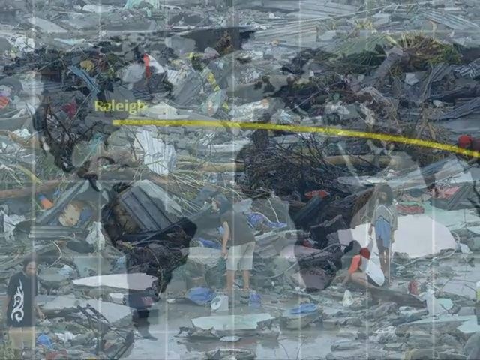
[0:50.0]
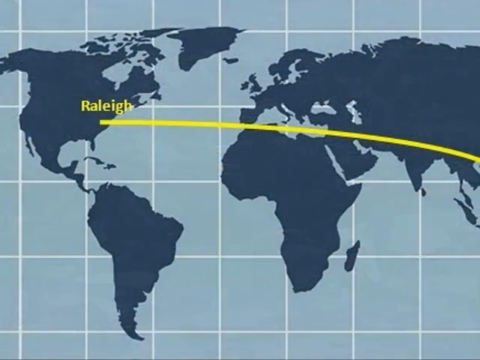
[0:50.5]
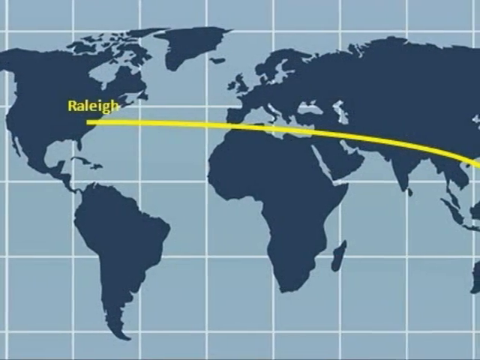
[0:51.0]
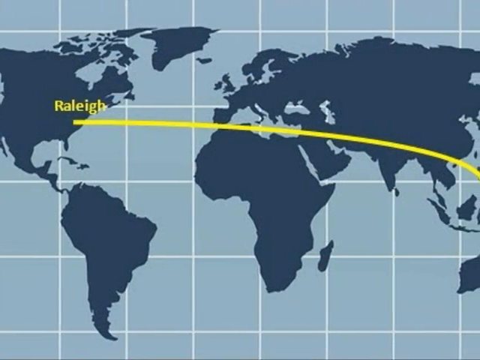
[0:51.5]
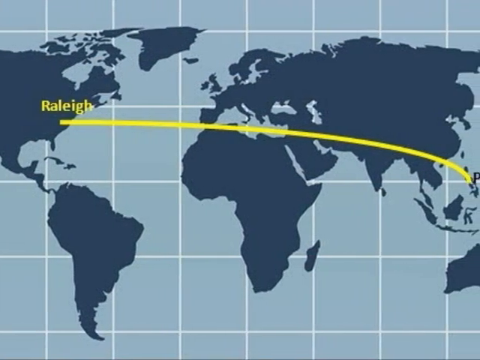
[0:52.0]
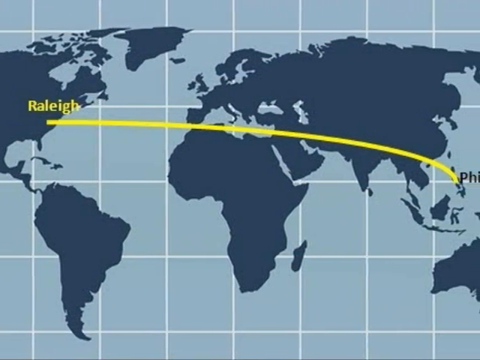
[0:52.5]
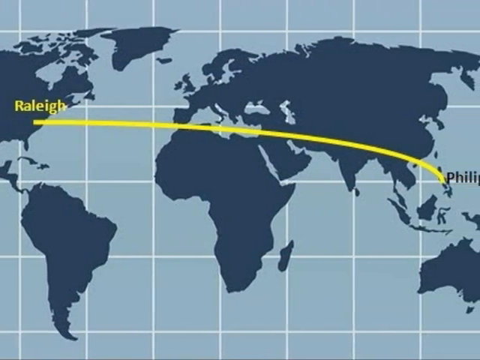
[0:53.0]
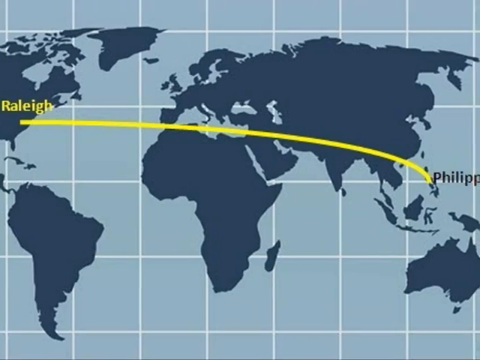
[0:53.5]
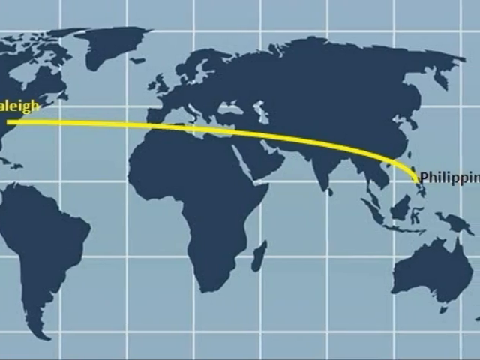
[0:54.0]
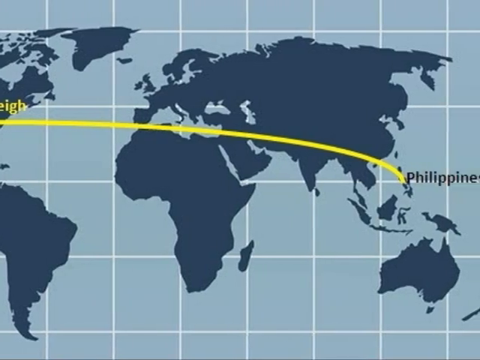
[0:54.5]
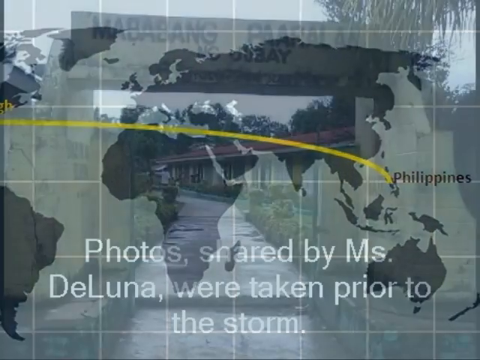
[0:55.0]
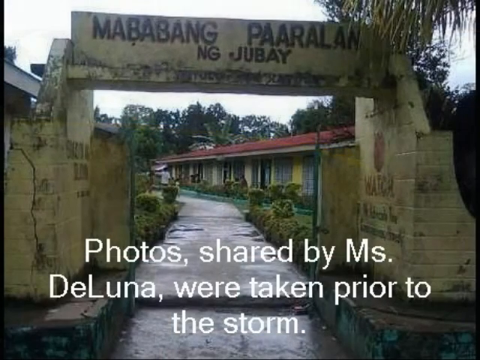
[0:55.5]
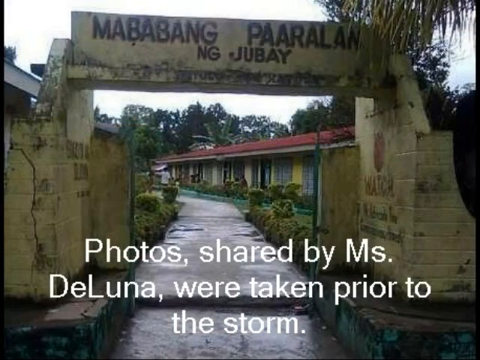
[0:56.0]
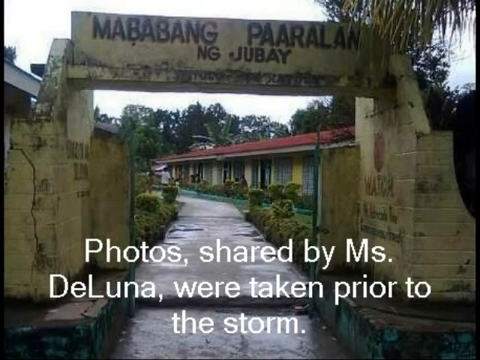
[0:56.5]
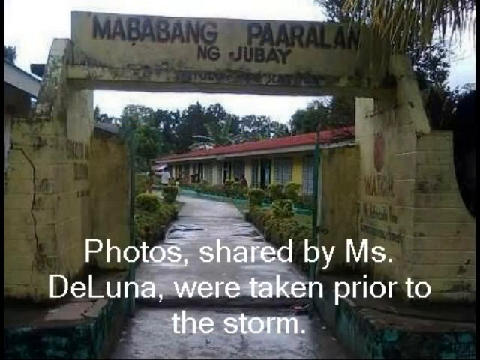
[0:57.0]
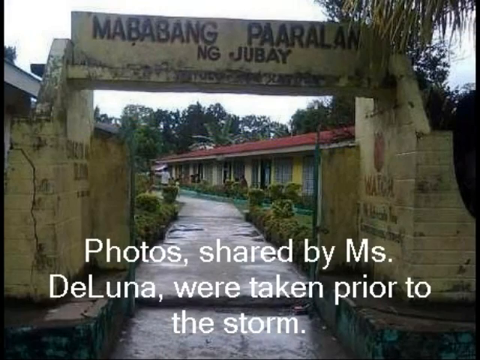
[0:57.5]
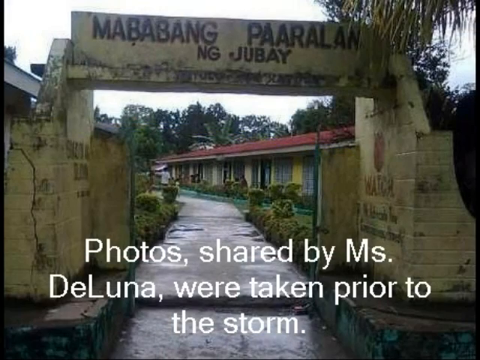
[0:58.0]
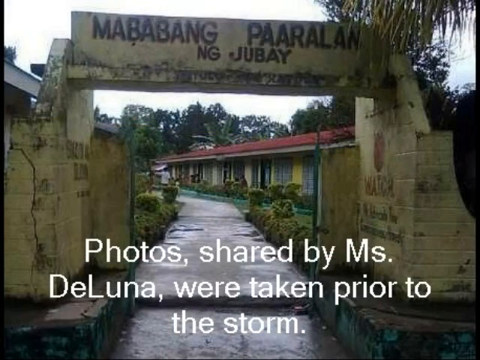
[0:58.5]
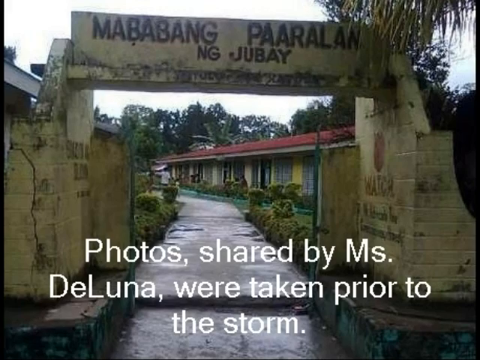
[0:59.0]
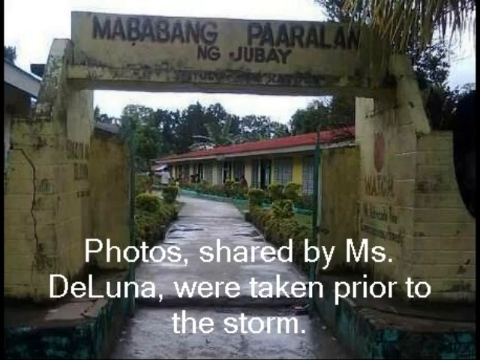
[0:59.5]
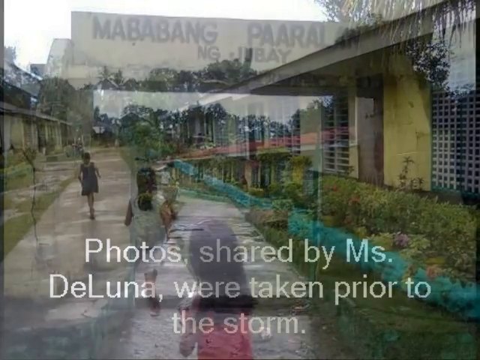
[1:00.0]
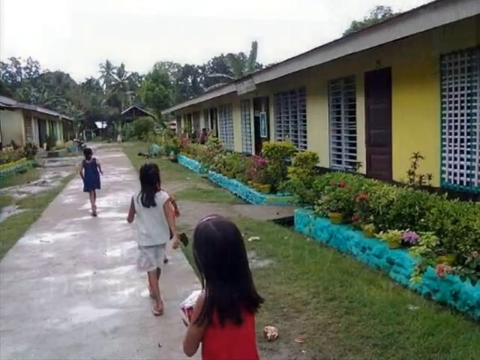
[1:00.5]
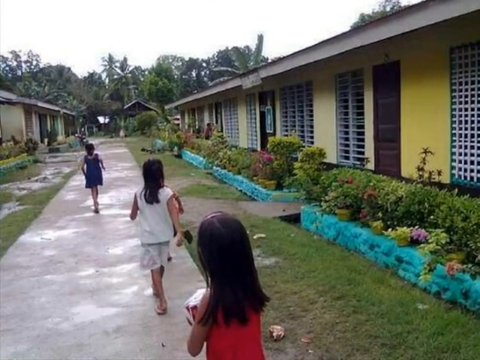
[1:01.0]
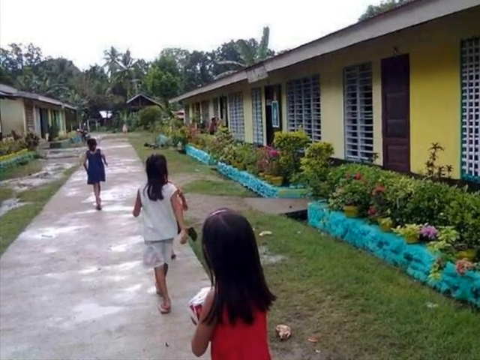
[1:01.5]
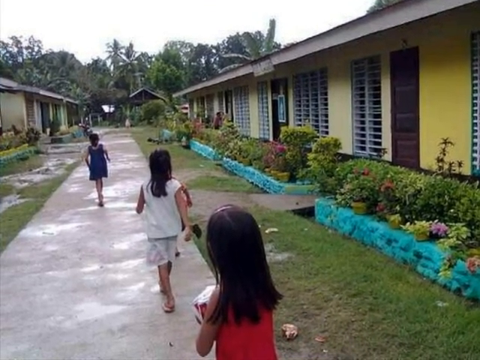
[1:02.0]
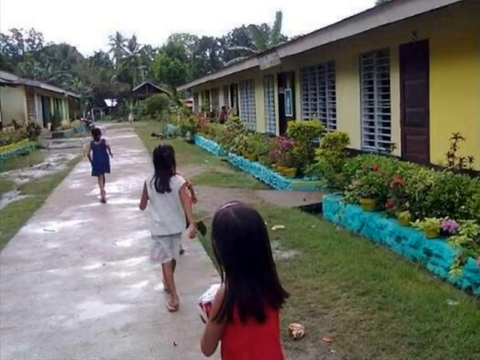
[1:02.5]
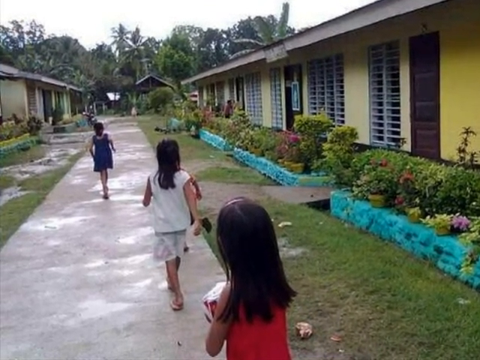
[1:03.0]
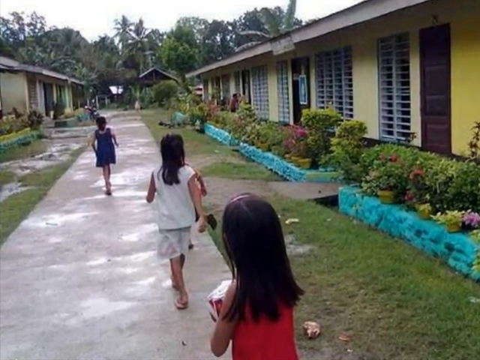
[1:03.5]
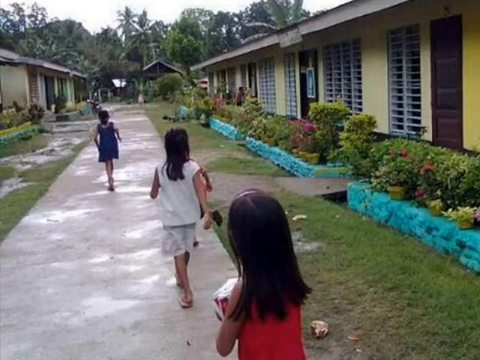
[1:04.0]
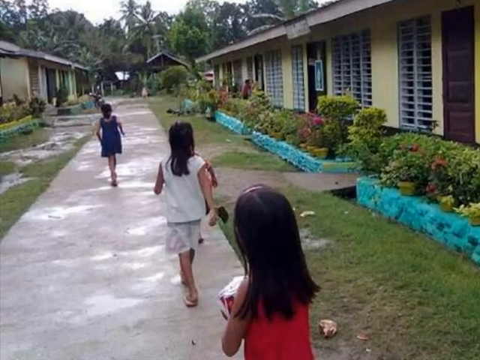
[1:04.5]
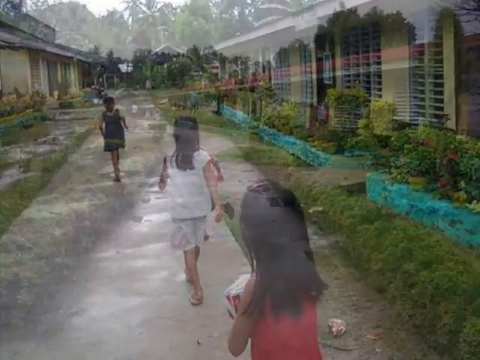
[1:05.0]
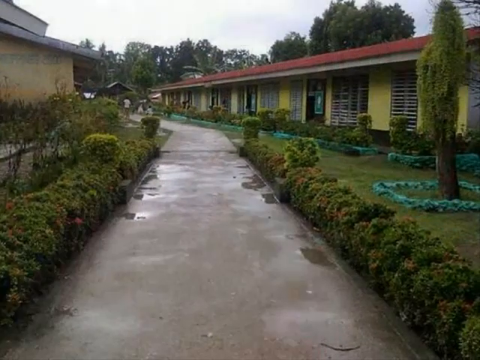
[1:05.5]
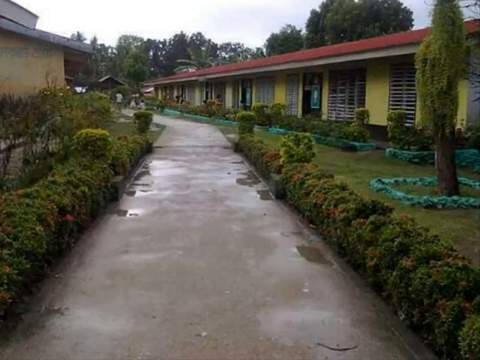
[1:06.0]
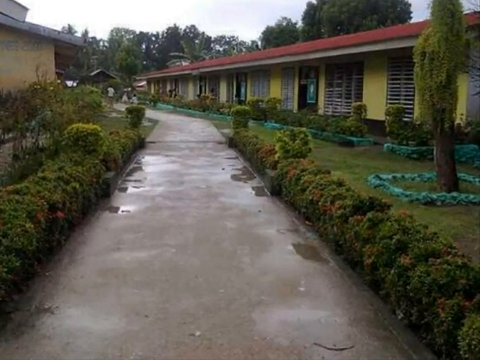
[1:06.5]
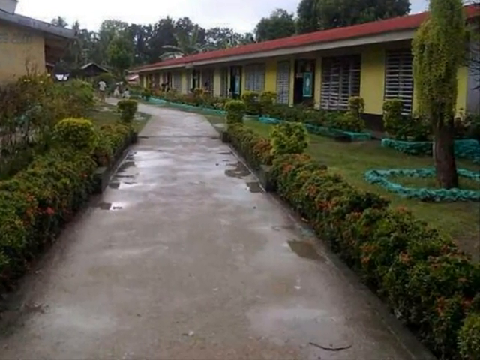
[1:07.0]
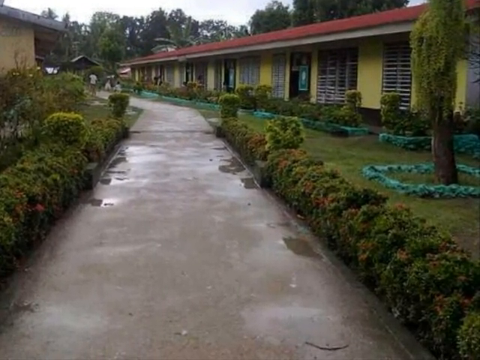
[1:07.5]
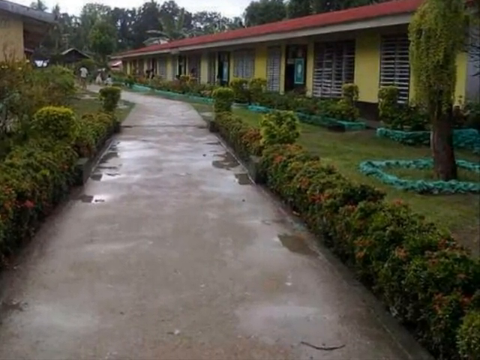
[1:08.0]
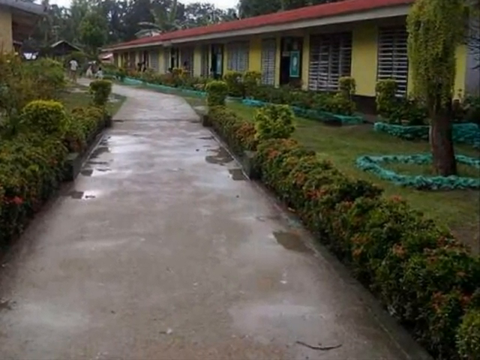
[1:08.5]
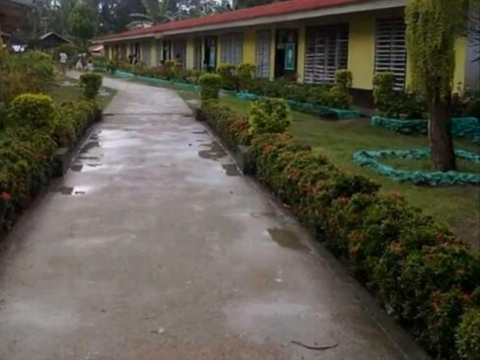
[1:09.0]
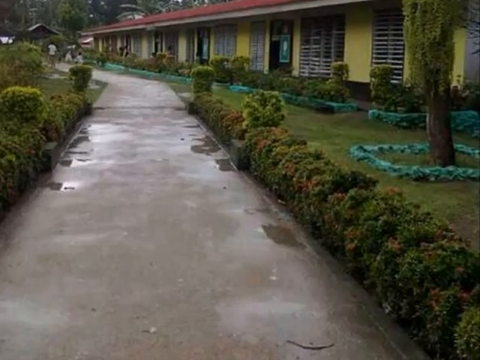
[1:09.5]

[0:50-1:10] A map of the Earth shows a long yellow line extending from the United States to the Philippines. The word "Raleigh" is in yellow and "Philippines" is in black. The line runs from the word "Raleigh" in North America over the Atlantic Ocean, Africa and Asia, finally landing in the Philippines. The video then transitions to an image of the front entrance of a building complex with the words "Mababong Paarala Ng Jubay" and "Photos shared by Ms. De Luna were taken prior to the storm" overlaying the image. The entrance appears to be made of yellow stone, with a concrete sidewalk lined with shrubs and bushes. A small yellow building with a red roof is in the background. Next, three children walk down the concrete sidewalk, with puddles of water pooled on it.